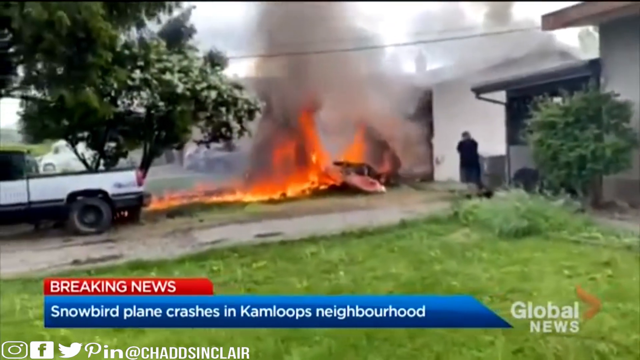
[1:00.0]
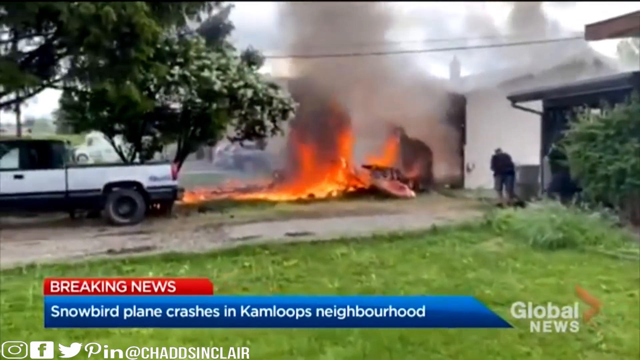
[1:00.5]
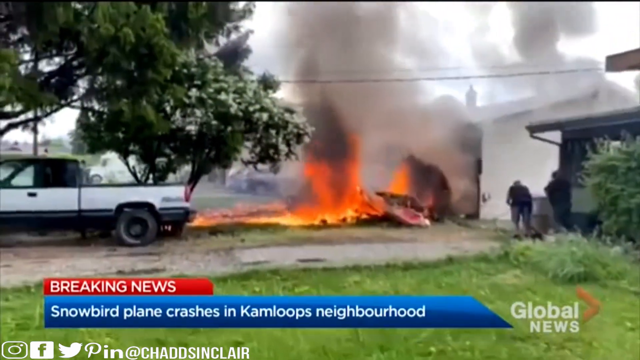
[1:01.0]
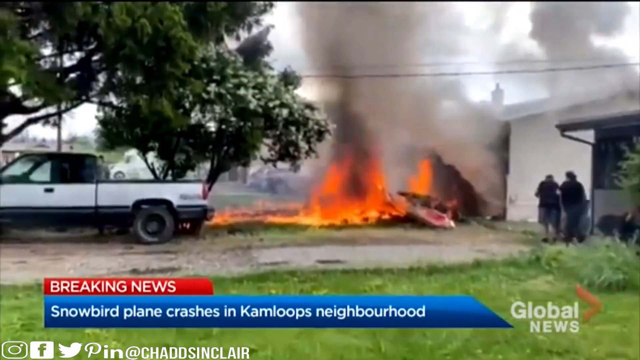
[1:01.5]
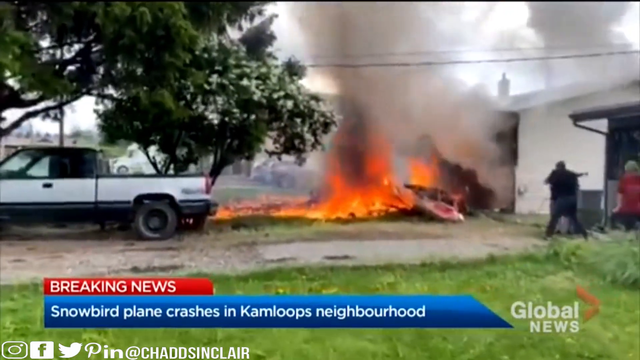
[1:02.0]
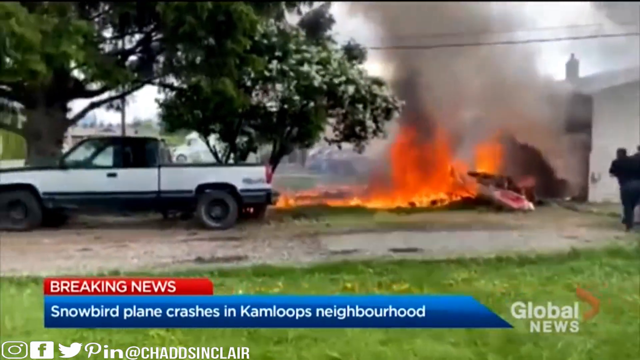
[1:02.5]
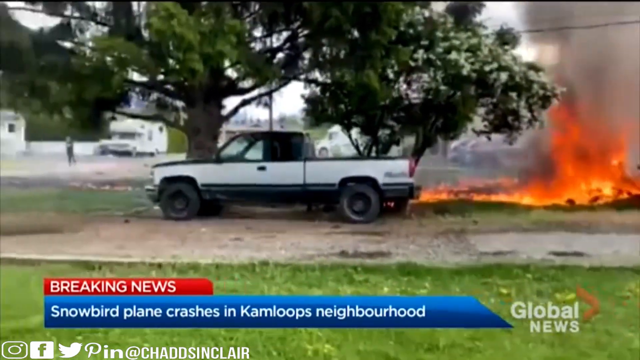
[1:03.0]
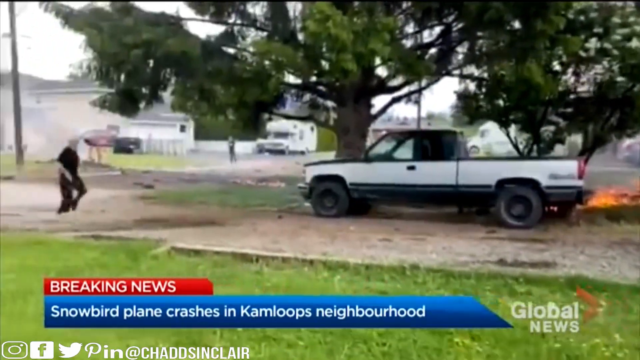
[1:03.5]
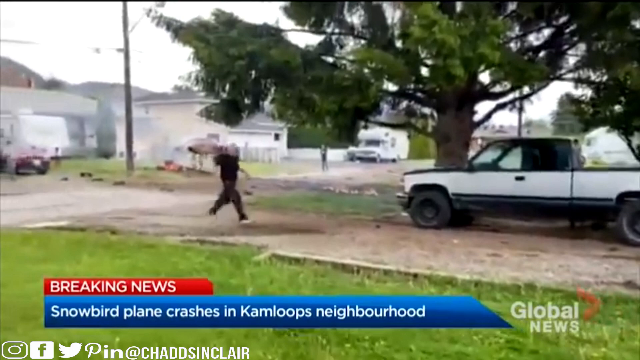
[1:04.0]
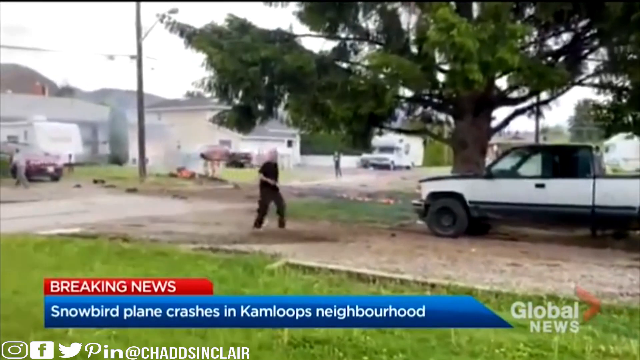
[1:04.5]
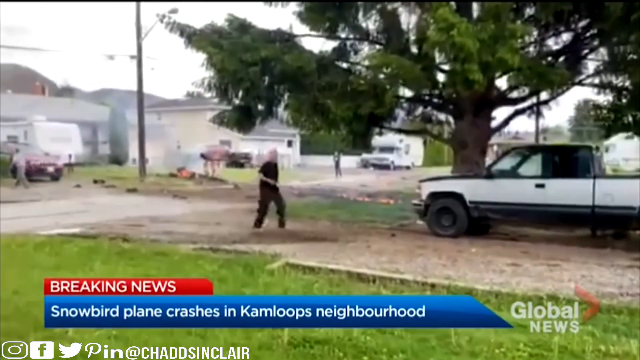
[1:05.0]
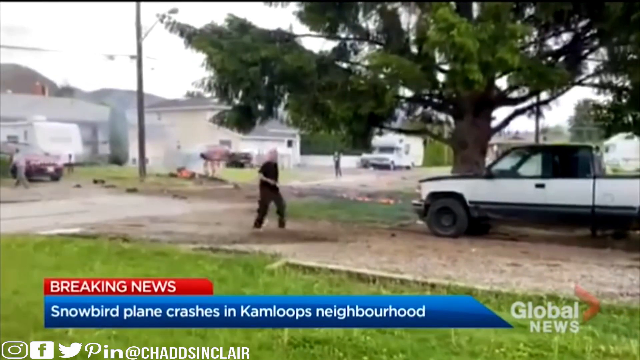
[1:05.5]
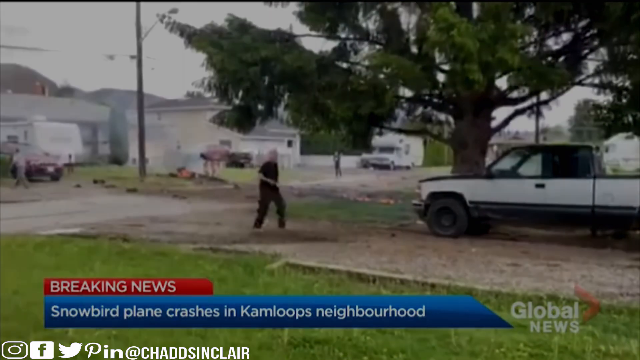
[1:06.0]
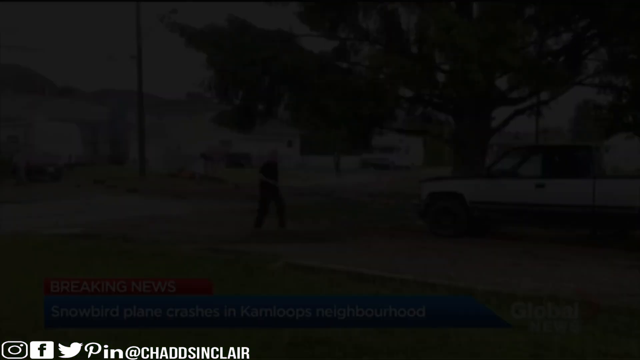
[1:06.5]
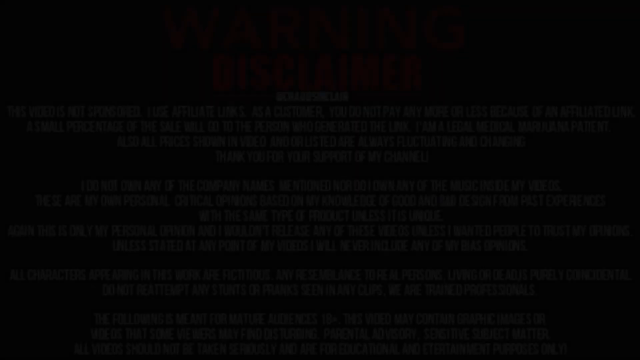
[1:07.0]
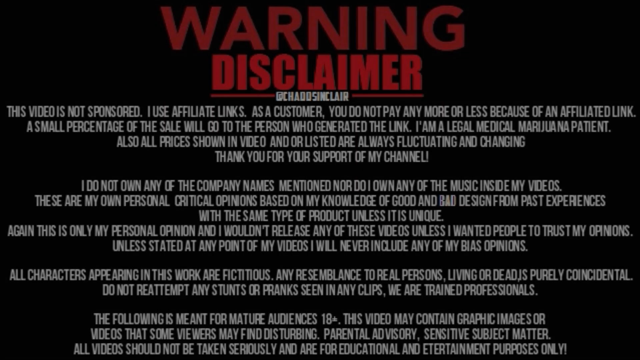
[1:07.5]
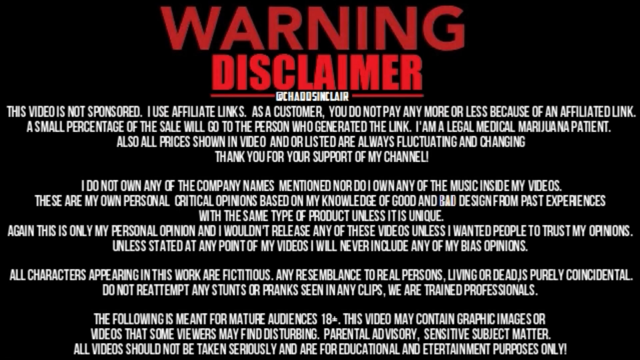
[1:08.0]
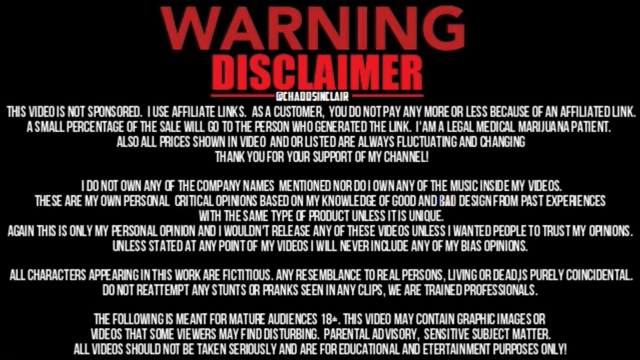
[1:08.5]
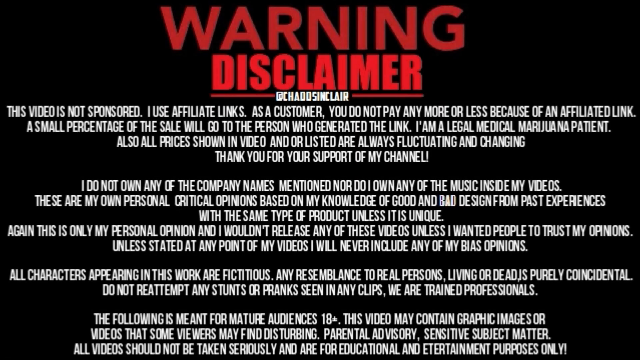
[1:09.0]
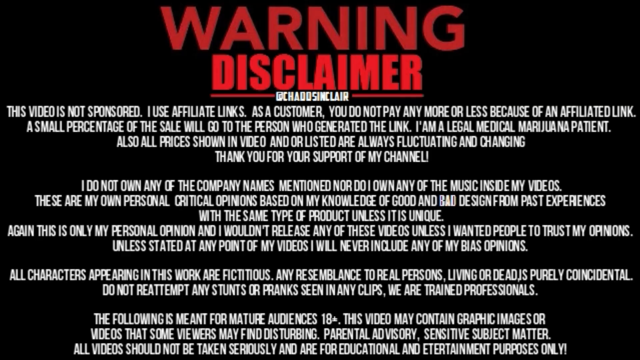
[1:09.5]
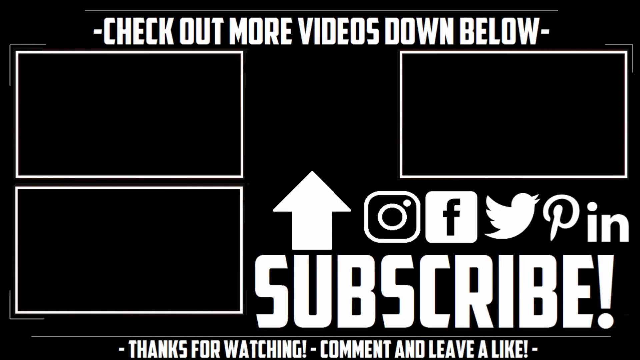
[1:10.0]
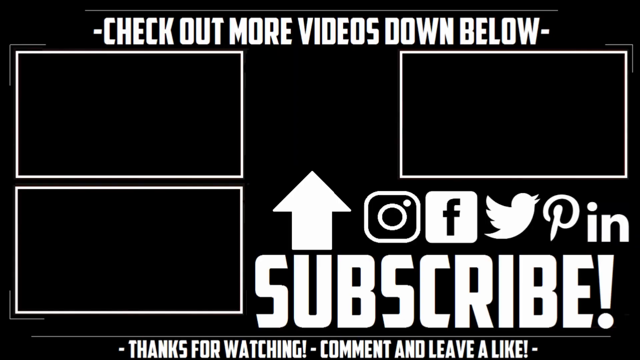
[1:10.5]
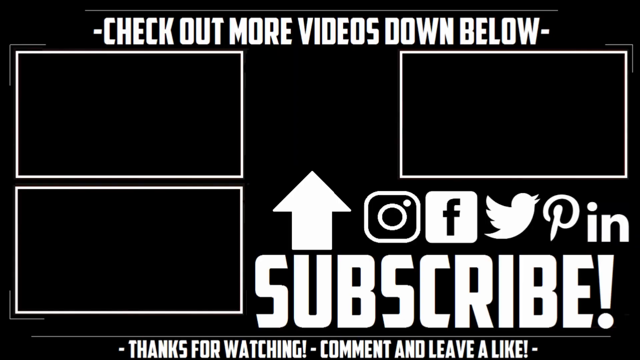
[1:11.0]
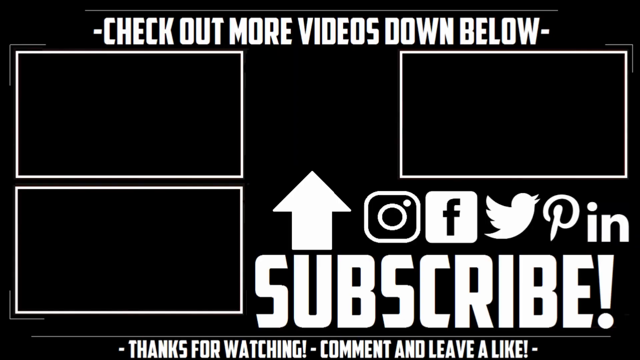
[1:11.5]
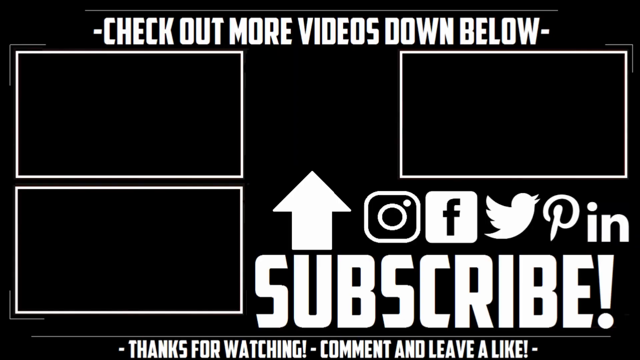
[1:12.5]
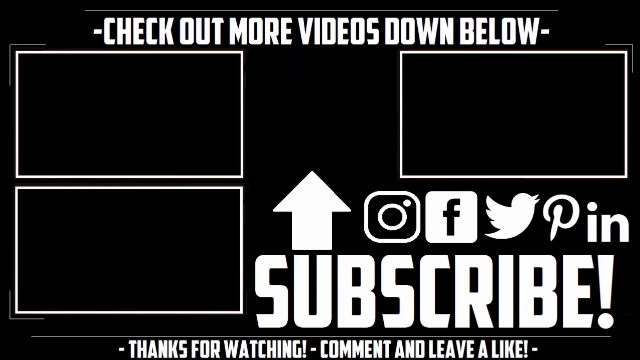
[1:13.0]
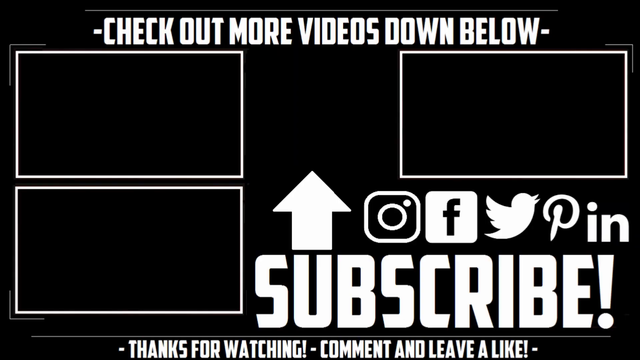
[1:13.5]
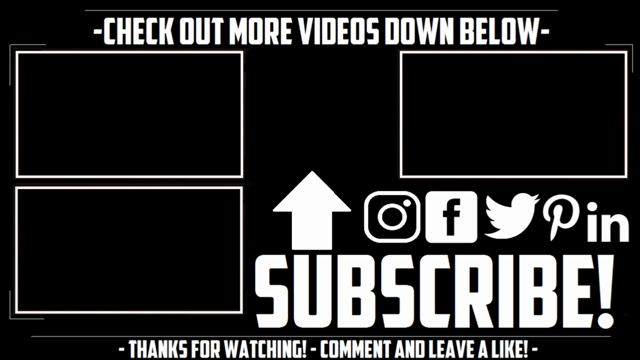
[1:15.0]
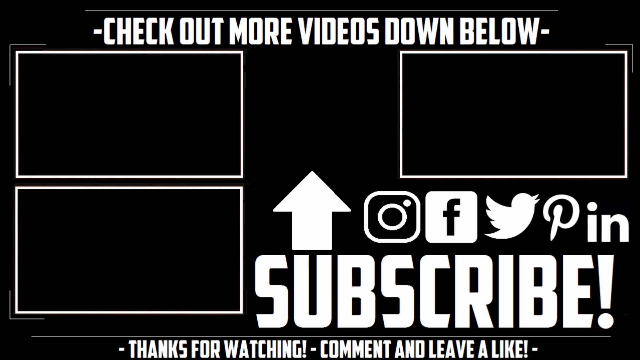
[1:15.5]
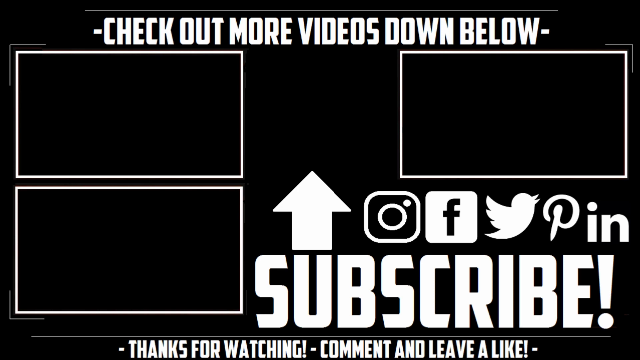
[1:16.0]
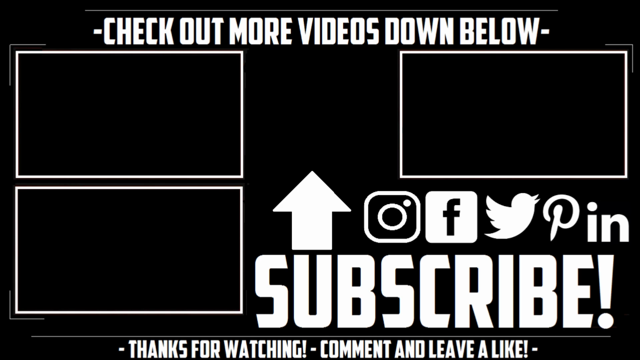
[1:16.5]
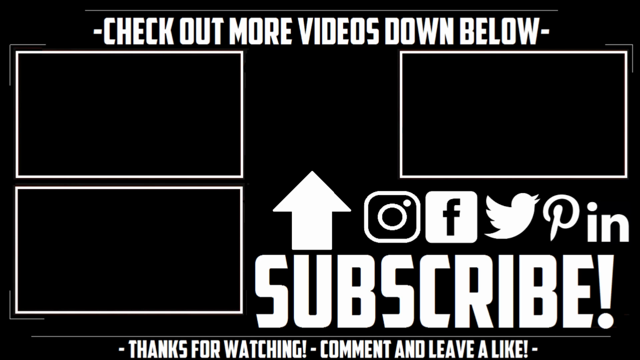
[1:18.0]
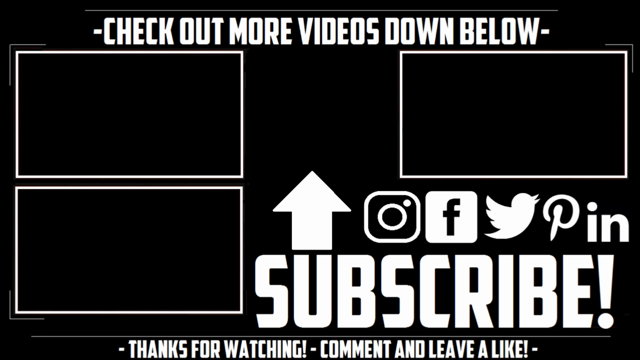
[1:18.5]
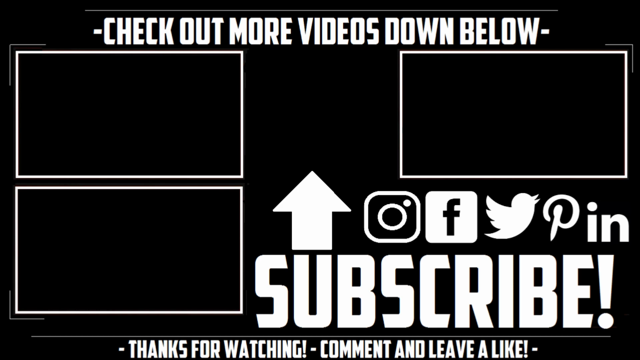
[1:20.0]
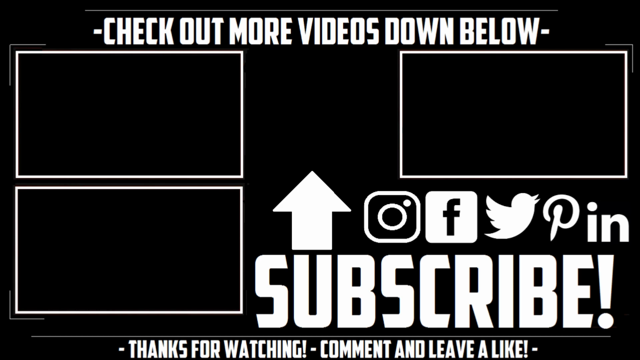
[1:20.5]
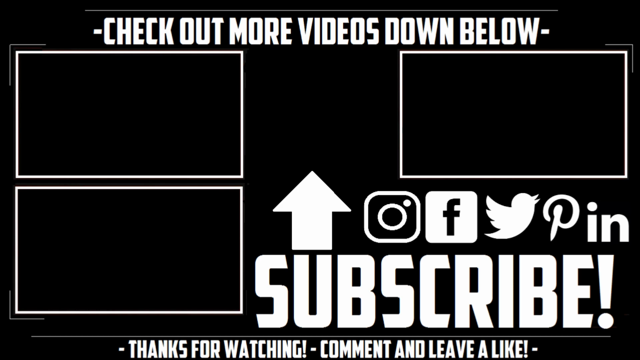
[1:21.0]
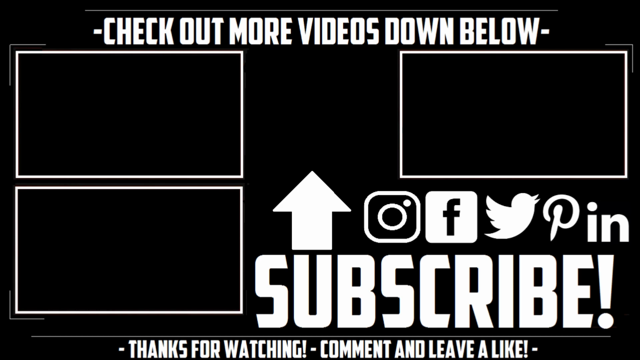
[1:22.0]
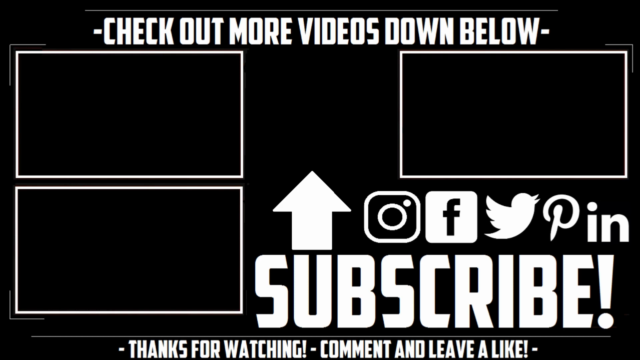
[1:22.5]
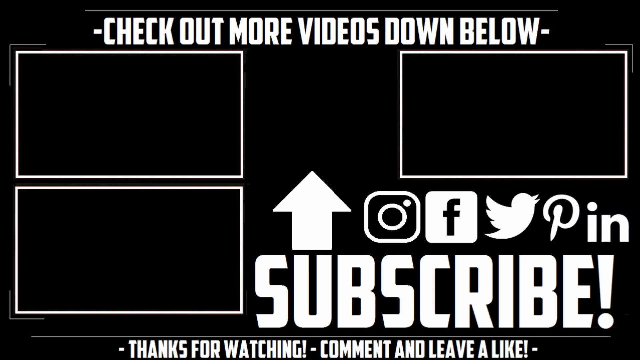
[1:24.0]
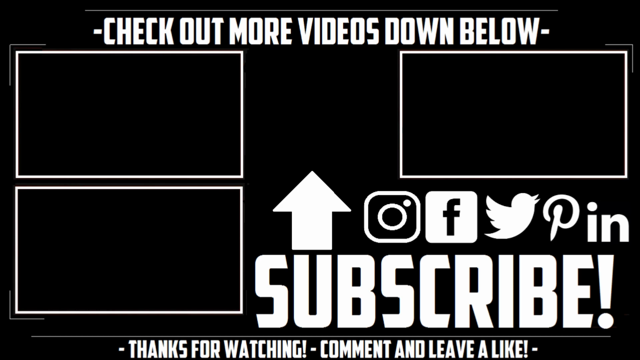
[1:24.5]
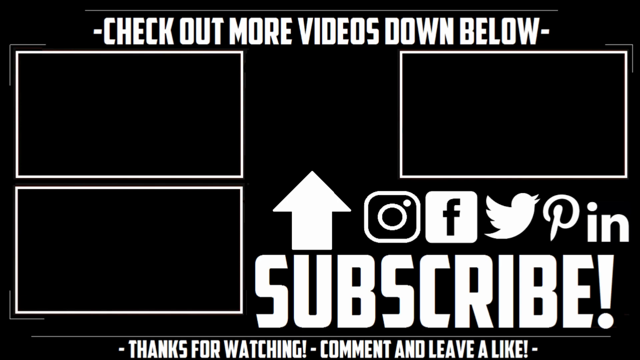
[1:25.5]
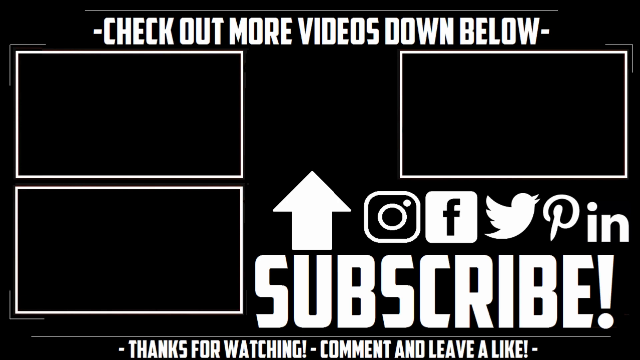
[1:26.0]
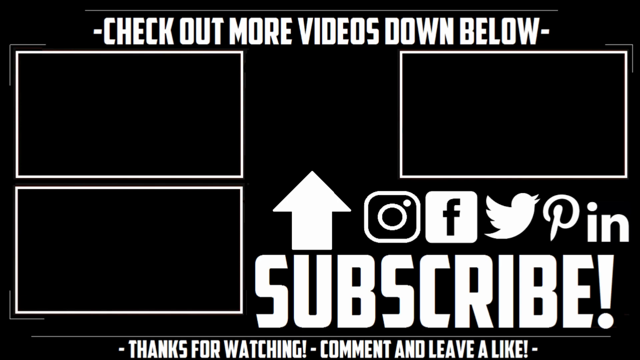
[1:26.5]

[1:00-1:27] A fire burns in front of a home; it looks like this was the plane. The flames are very orange and yellow, and there is smoke all around. The house behind the fire is very close and white. A man in black is up near the fire. There is a tree in front of the fire, and a white and black truck is in the driveway of the home. The camera then pans over to what seems to be a neighborhood, with houses lined up and white vans parked there. A man in black runs up to the driveway. At the bottom of the screen, a red rectangle reads "Breaking News" with the writing in gray, and below it a blue rectangle reads "Plane Crashes in Kamloops neighborhood." Green grass is on the left of the driveway. The video then returns to the warning disclaimer, followed by "check out more videos down below" and "subscribe" in white bold lettering, with an arrow going up where it says subscribe.